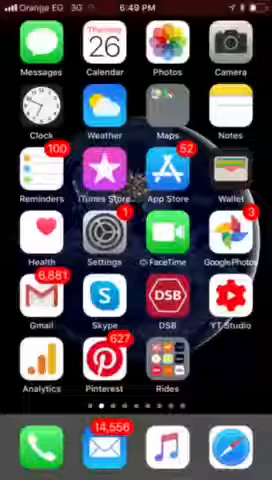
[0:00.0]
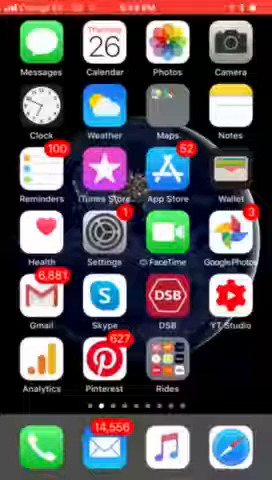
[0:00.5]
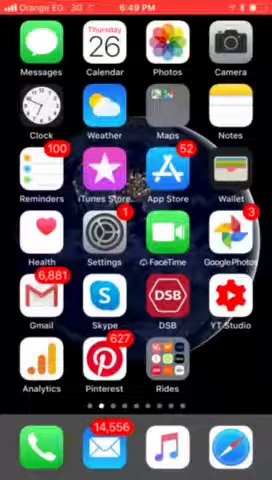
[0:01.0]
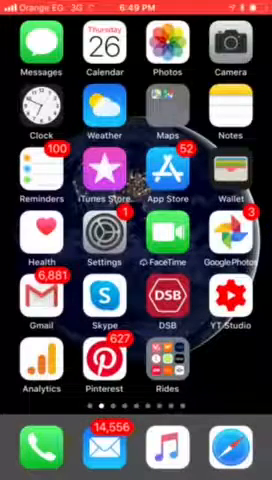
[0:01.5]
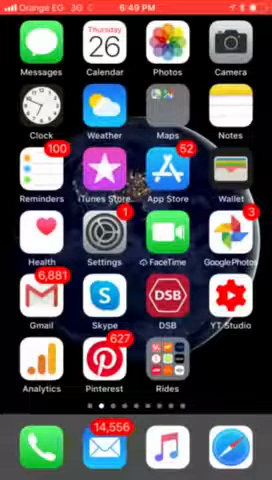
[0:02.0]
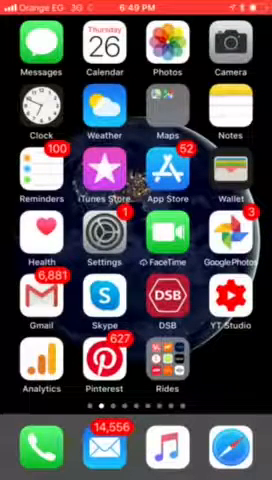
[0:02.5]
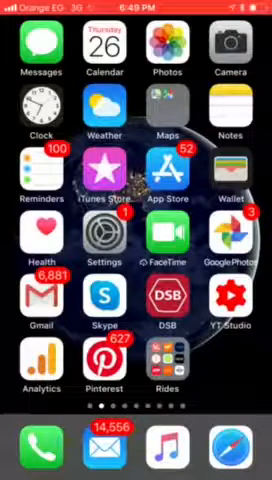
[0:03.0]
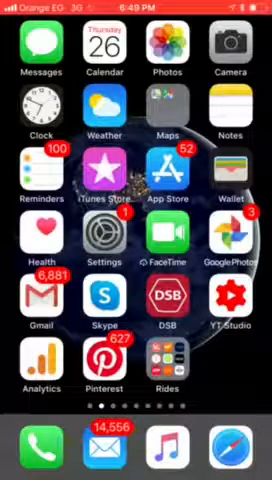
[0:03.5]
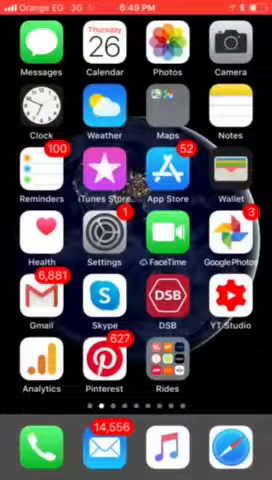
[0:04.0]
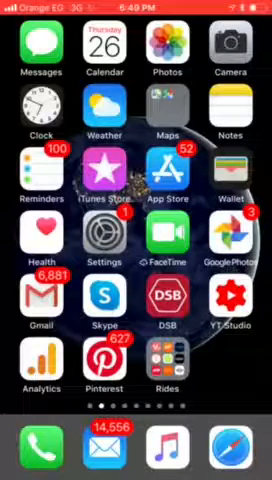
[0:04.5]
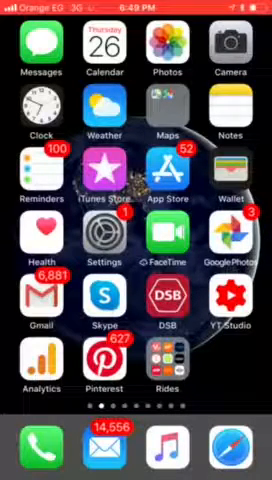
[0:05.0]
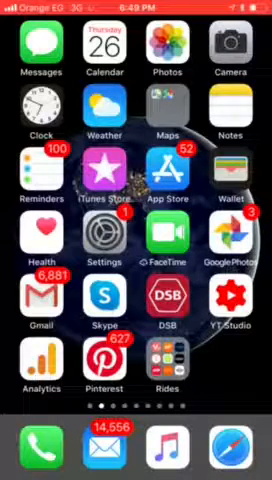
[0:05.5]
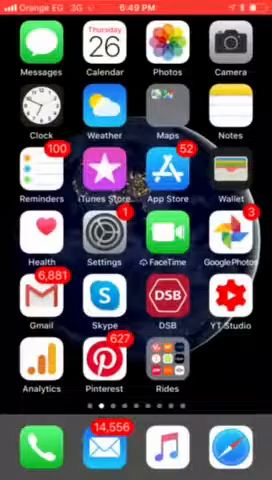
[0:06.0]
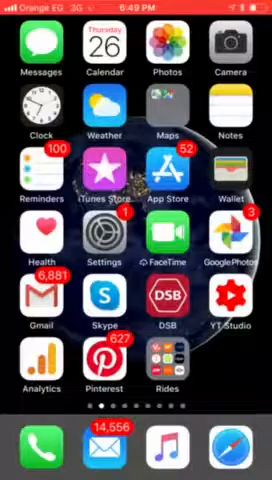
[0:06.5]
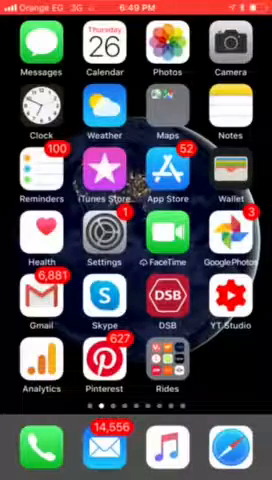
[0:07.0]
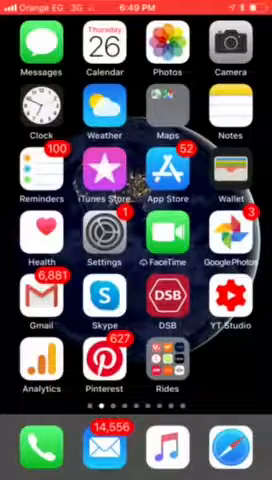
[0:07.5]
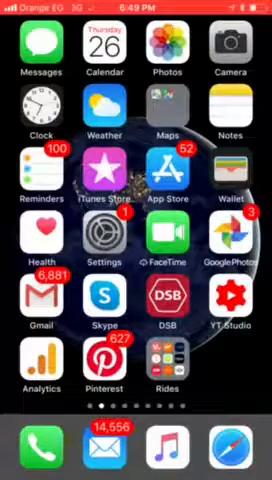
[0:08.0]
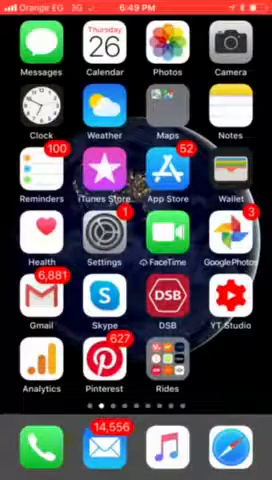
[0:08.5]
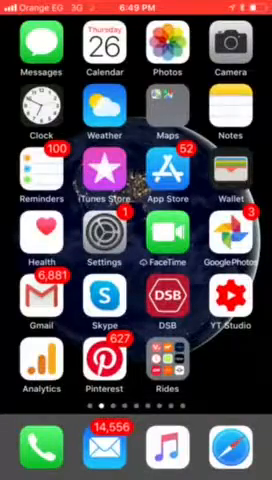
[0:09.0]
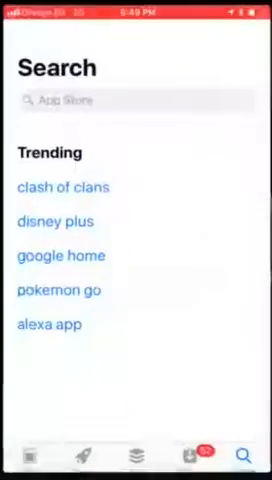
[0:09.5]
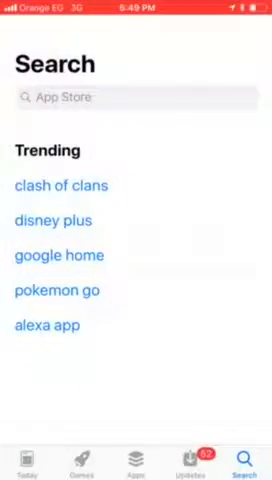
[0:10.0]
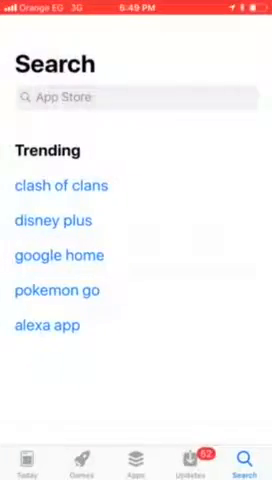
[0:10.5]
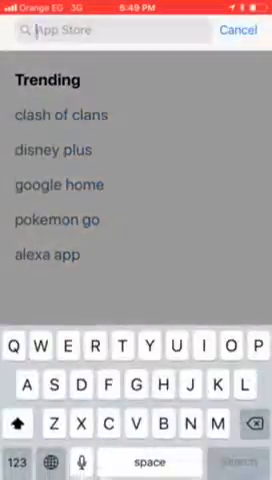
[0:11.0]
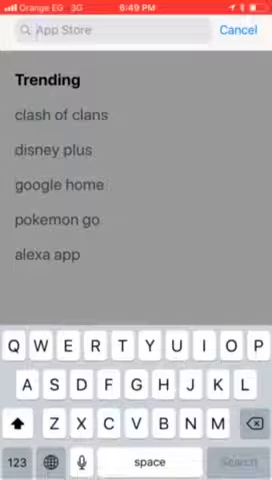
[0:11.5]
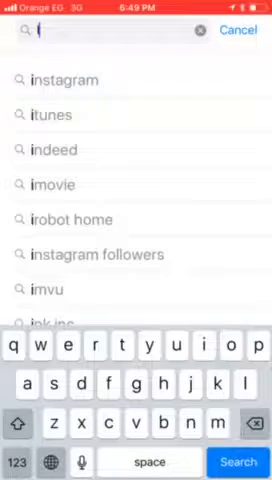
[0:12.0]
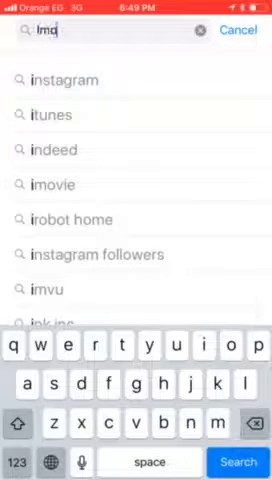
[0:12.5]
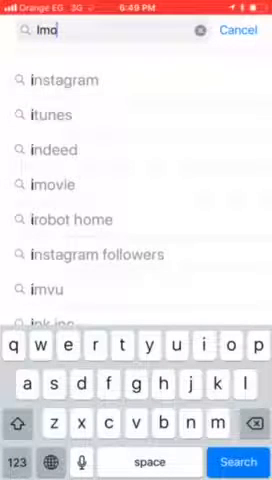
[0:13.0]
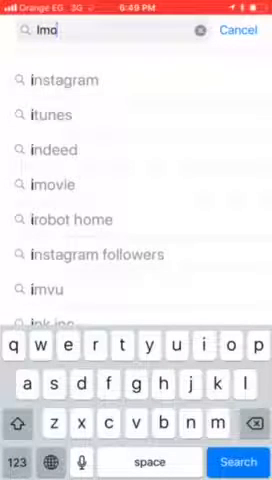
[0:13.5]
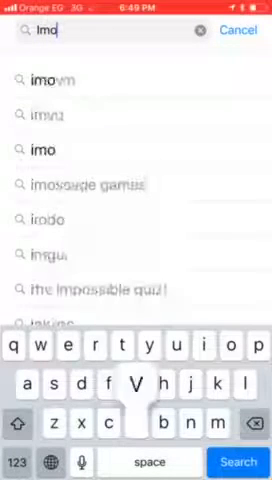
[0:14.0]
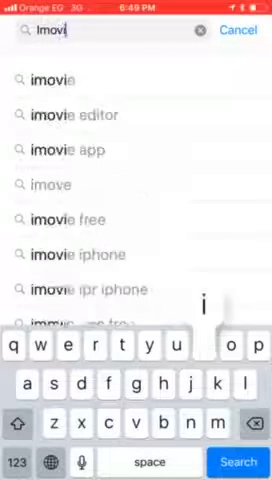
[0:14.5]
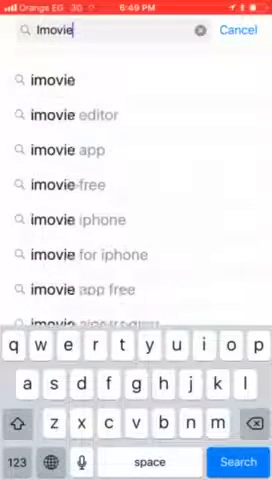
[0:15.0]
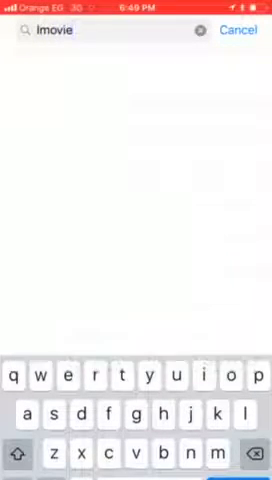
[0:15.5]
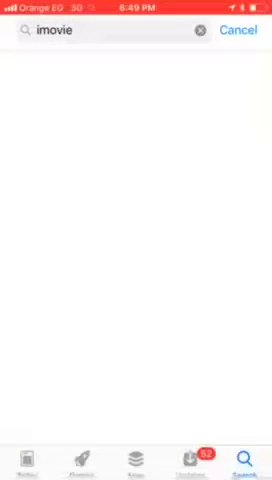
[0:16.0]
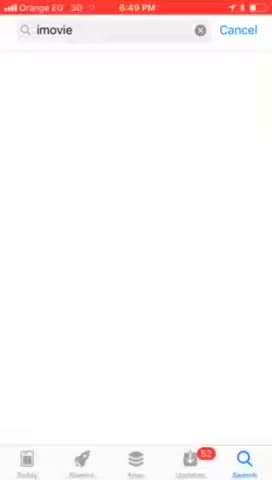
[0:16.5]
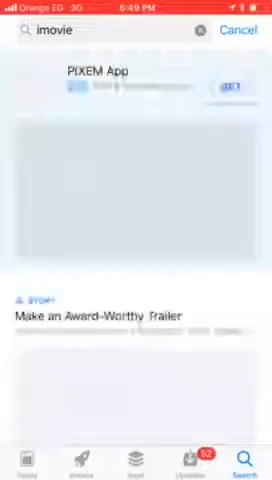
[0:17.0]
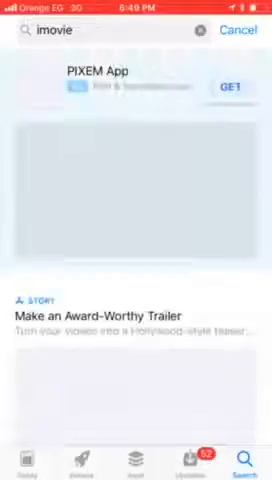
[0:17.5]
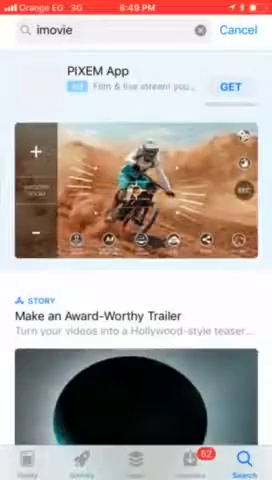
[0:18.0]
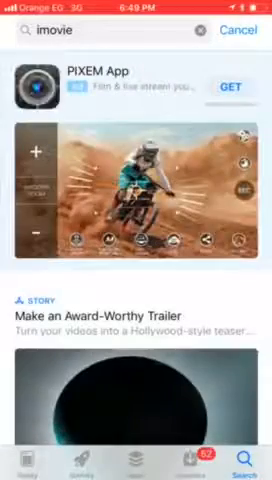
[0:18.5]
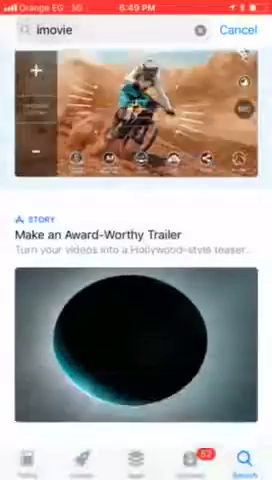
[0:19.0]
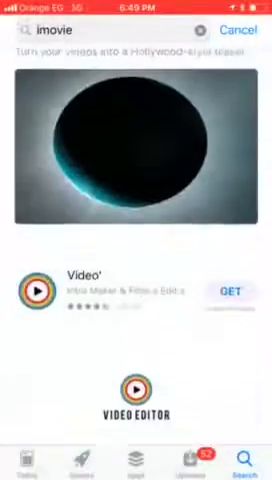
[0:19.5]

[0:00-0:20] An iPhone displays its home screen, with iMessage as the first app, followed by Calendar, Clock, Maps, Notes and Reminders. Other apps on the home screen include Photos, Camera, Weather, the App Store, Wallet, Health, Settings, FaceTime, Google Photos, Gmail, YT Studio, Pinterest and Apple Music, with Safari below. The status bar shows Orange and 3G, and the time is 6:49 p.m. Someone opens what appears to be the App Store, navigates through it and searches for iMovie.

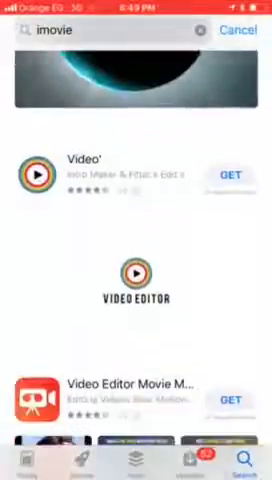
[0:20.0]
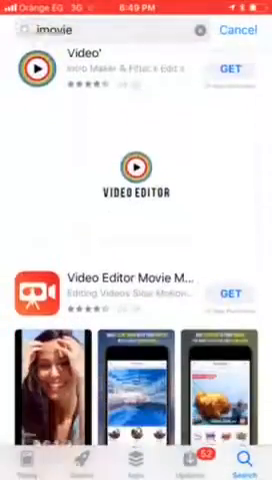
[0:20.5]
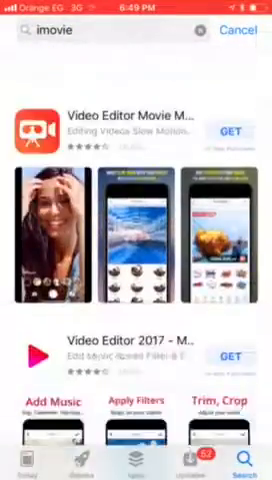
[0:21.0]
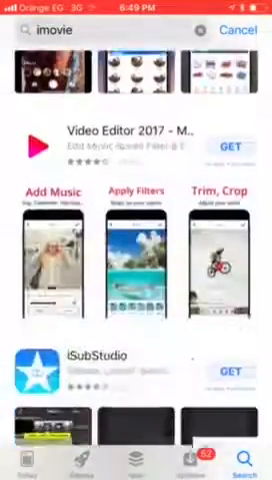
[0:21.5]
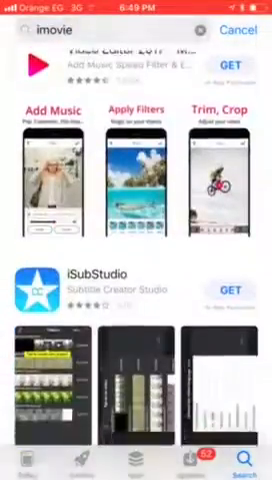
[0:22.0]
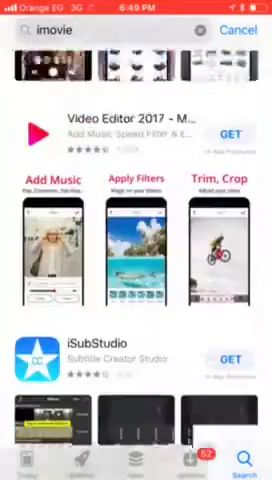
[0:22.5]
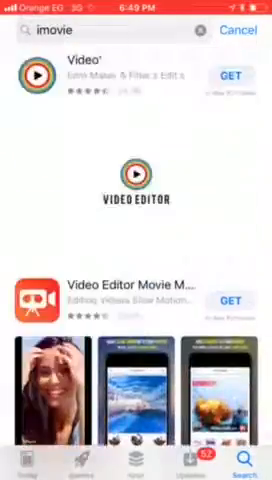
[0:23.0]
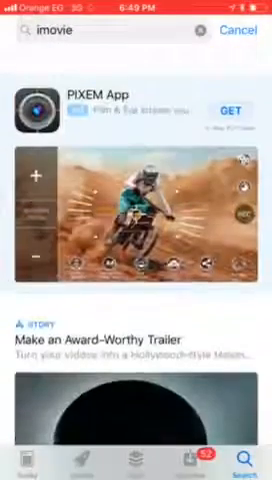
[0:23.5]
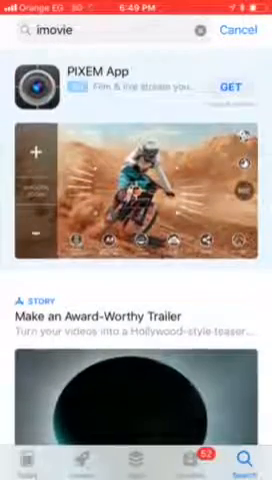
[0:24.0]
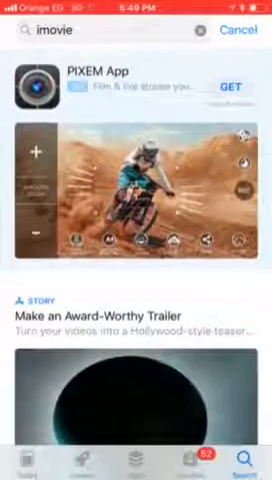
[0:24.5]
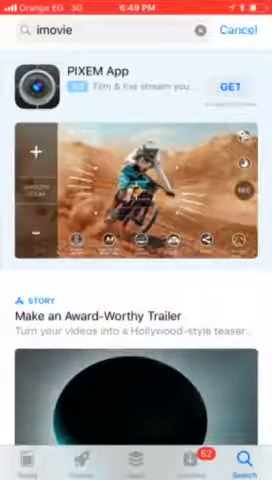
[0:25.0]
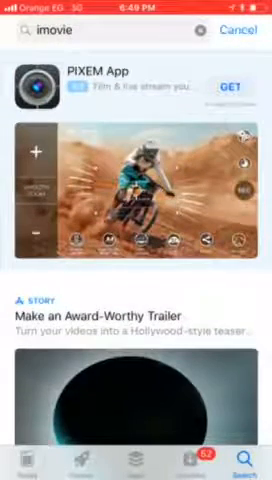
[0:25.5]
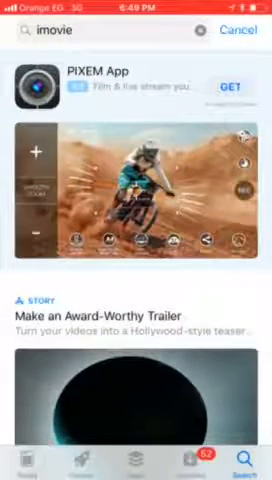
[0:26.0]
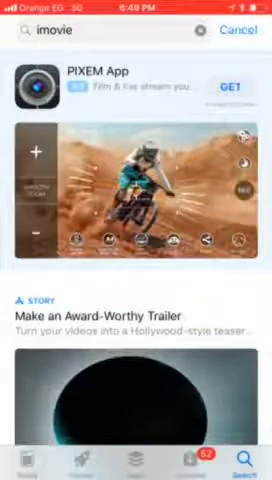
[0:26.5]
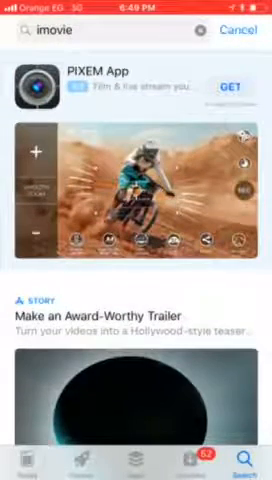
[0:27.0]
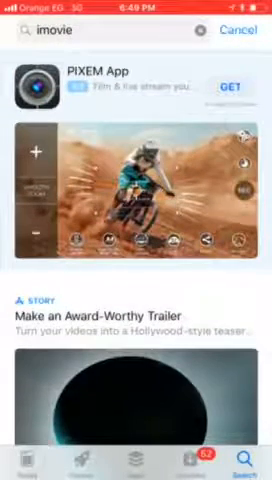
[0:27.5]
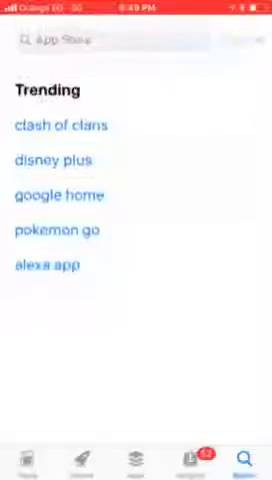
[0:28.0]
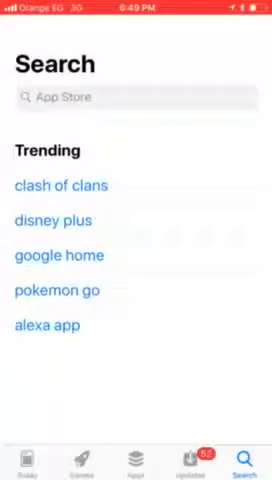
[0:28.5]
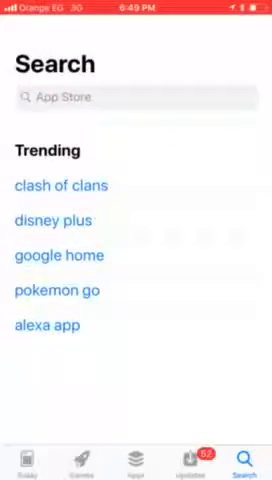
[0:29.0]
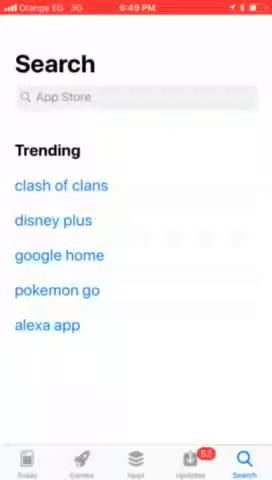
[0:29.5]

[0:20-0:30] The person looks through the App Store search results for an app like iMovie, but the results show apparently PIXMA apps along with other apps such as video, video editor and movie apps. No iMovie result appears, and the person keeps looking through the search results on the screen.